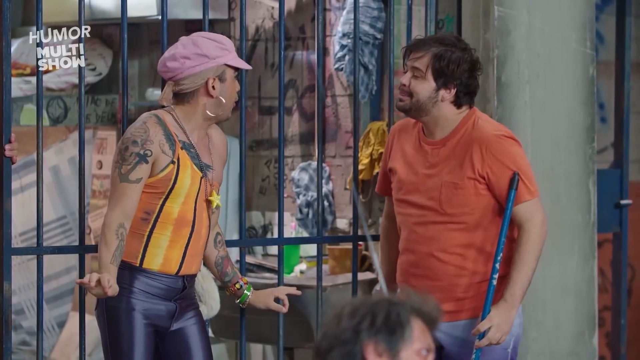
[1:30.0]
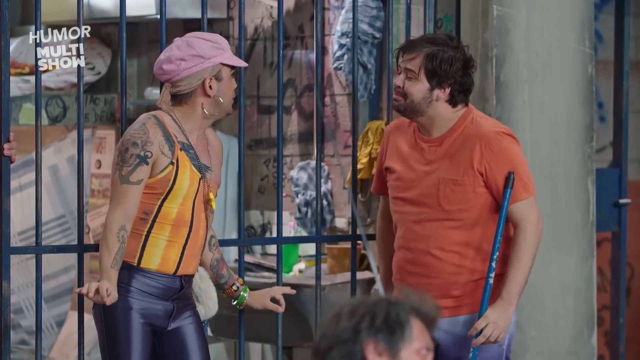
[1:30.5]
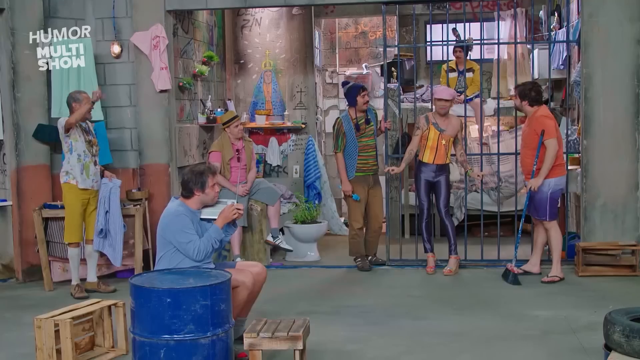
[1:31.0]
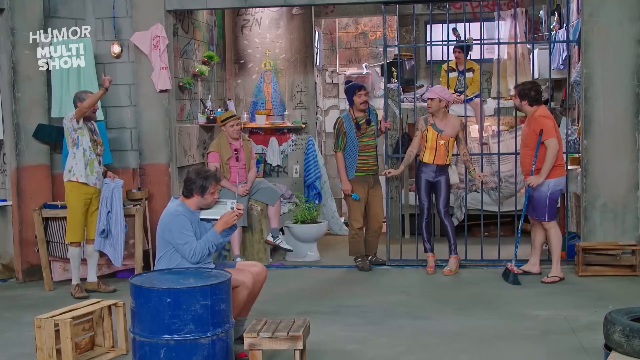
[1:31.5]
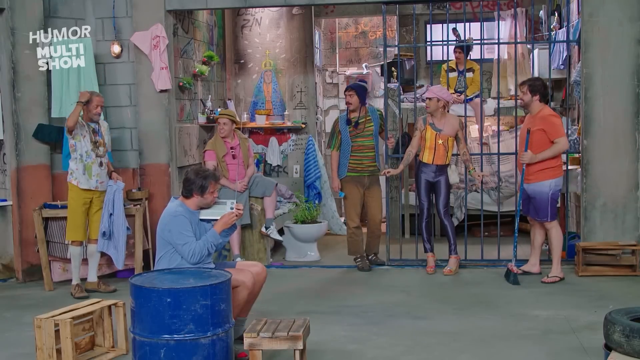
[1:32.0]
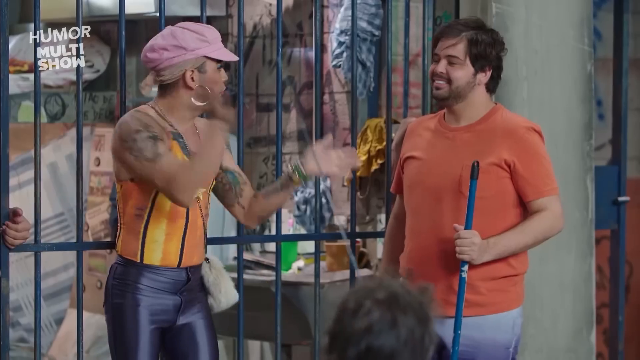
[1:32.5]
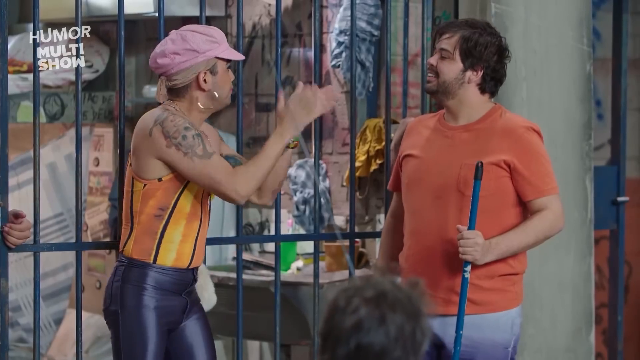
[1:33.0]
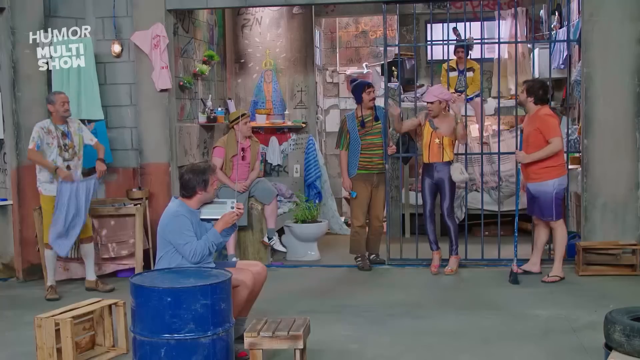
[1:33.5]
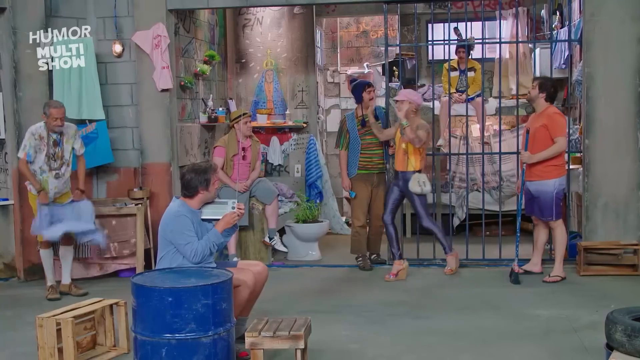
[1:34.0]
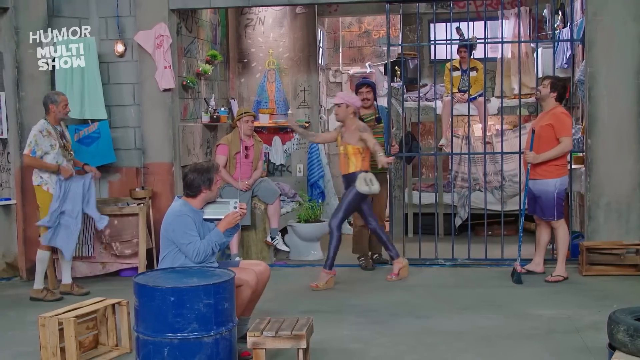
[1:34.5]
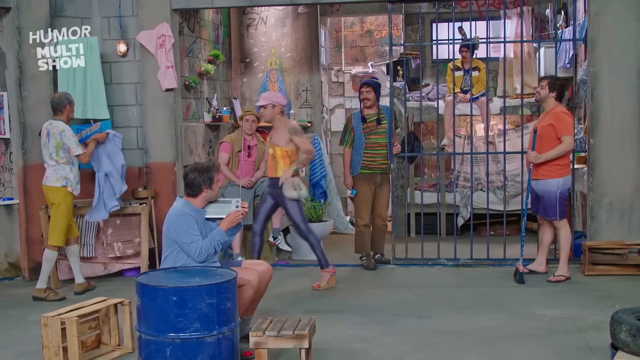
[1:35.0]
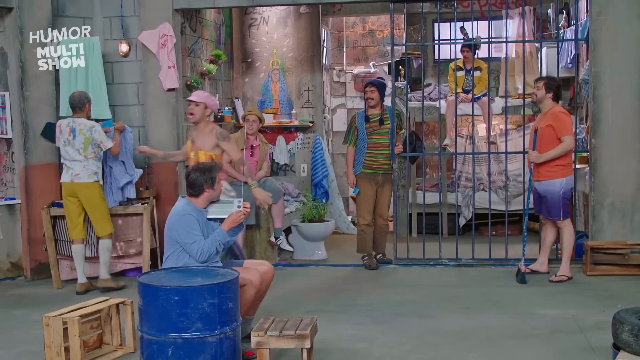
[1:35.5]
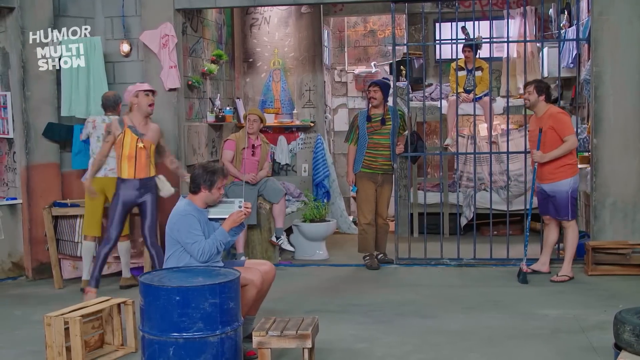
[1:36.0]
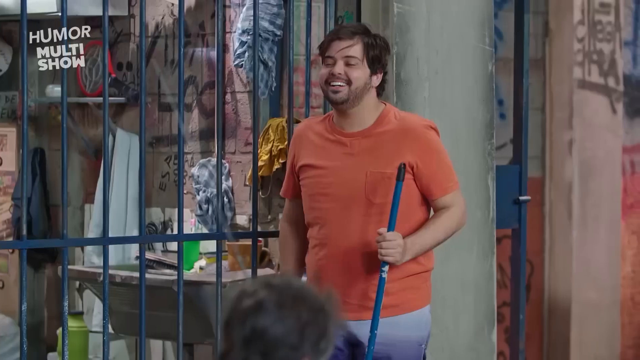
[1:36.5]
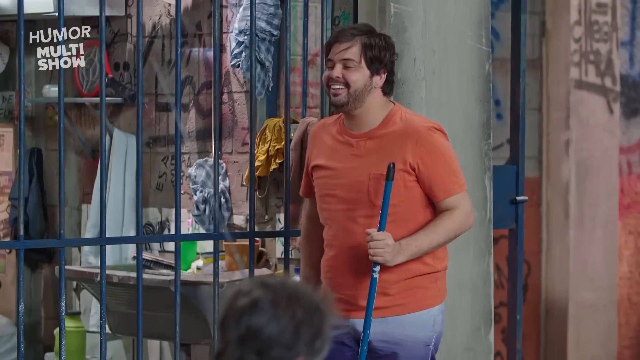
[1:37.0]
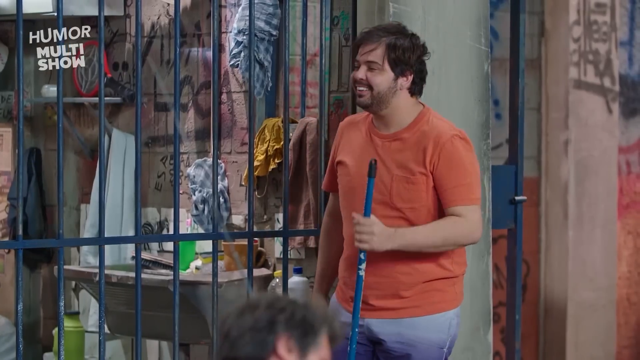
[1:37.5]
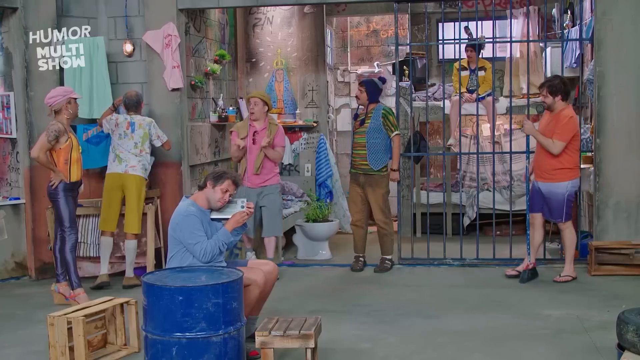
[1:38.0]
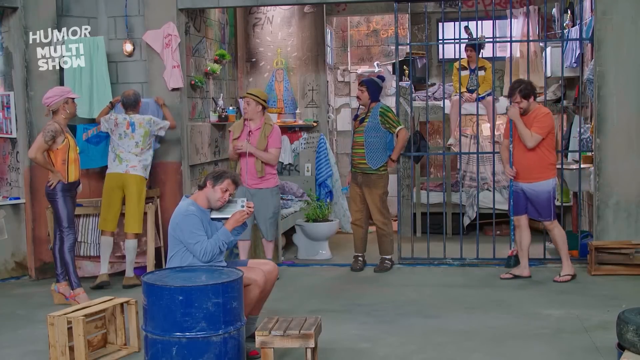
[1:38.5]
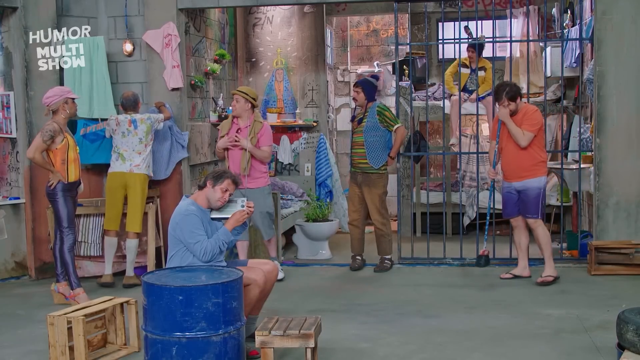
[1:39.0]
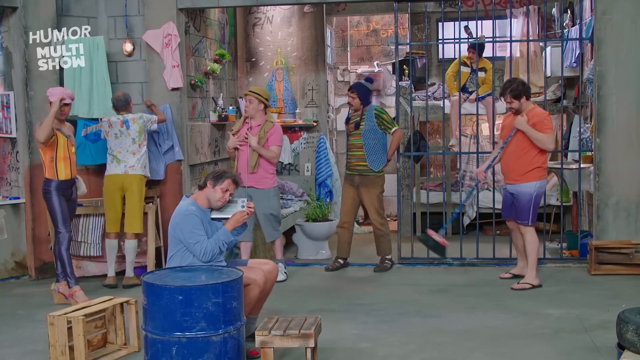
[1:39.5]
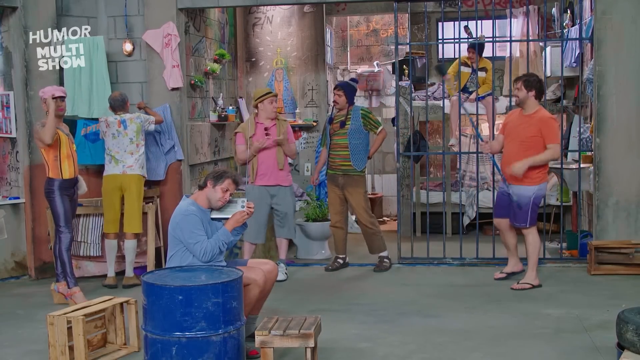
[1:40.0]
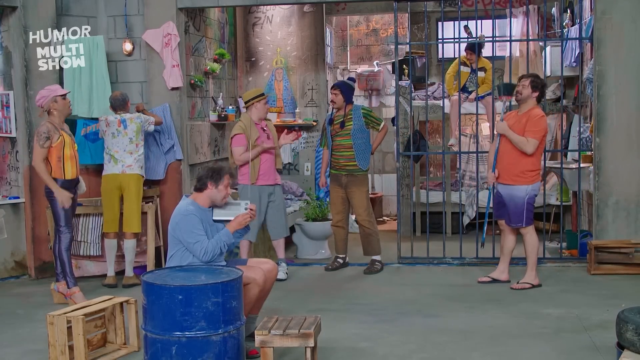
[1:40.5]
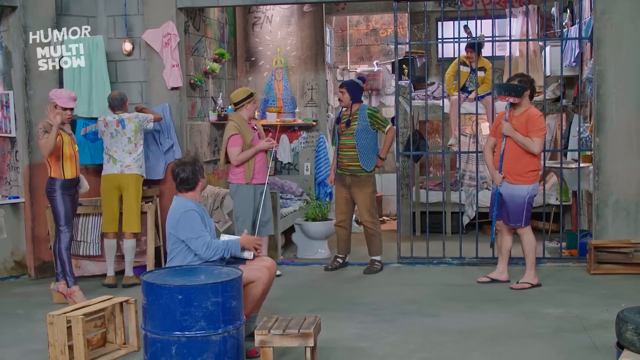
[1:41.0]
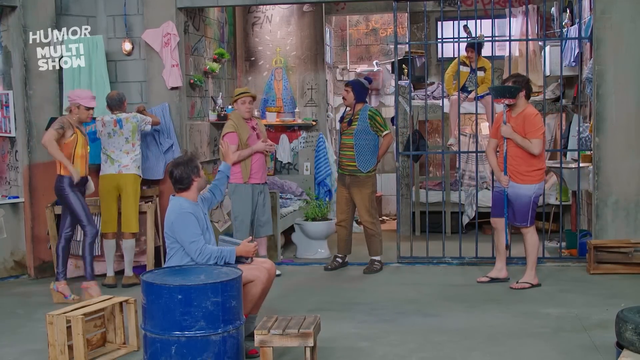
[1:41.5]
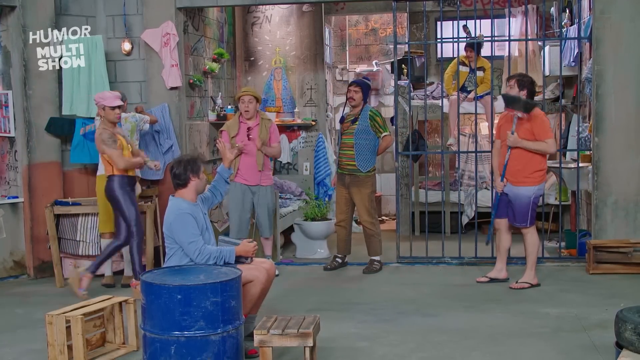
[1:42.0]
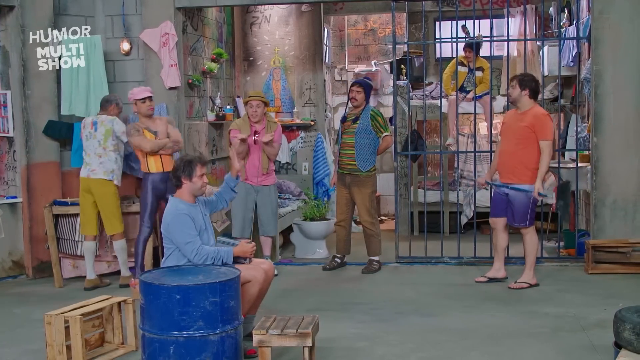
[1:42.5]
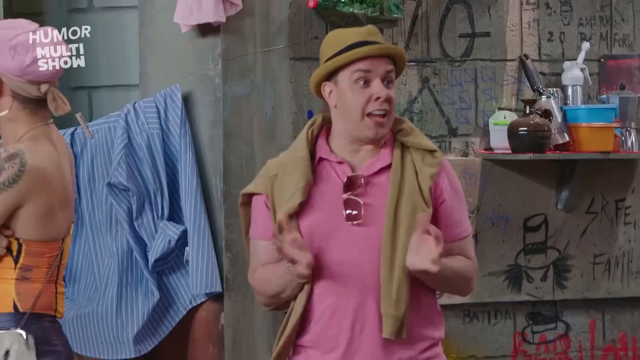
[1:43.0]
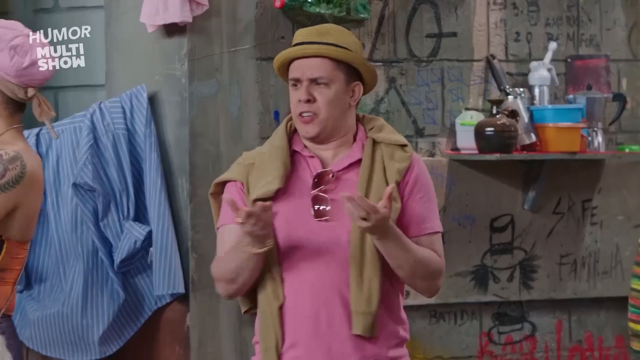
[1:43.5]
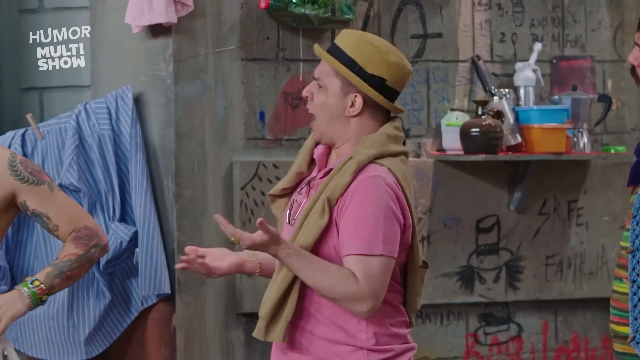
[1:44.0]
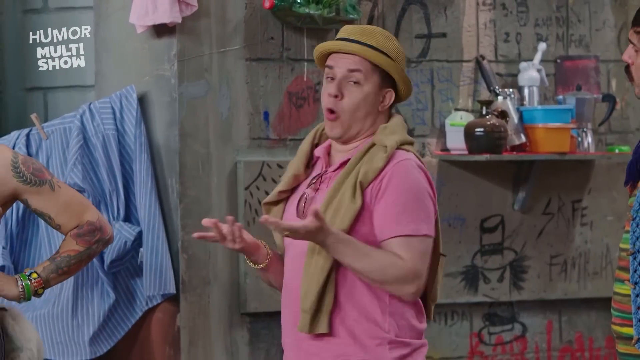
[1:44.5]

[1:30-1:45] Five people in a jail cell in the Humor Multishow are having discussions. The transvestite prostitute in lycra pants and a yellow and orange striped tube top kicks her legs up as they all chat. A man in a pink shirt and a tan straw hat polishes some sunglasses. A man in a long-sleeve blue shirt sits on the edge, agreeing and talking with the others. A fat man in an orange shirt holding a broom chats with the man with the pom-pom on his head, and holds the broom up in front of his face as if embarrassed. The man with the mustache seems to be the troublemaker and says things to the transvestite prostitute that make her mad. She has taken off her hat and yells at everyone, then puts her hat back on. The person in the bed behind the jail cell gets yelled at by her and flinches. She points at the man with the funny hat and the man in the orange shirt, and they talk back to her and point. She claps her hands, trying to get a point across about something. An old man is trying to fold clothes.